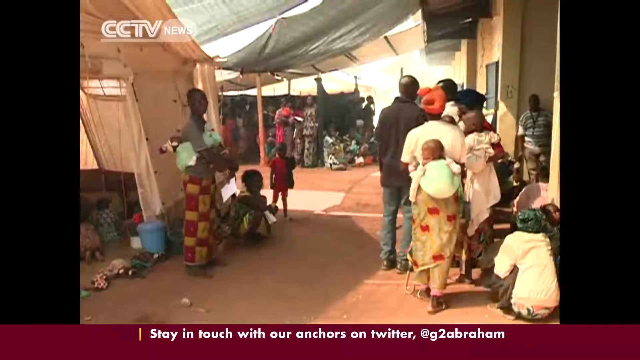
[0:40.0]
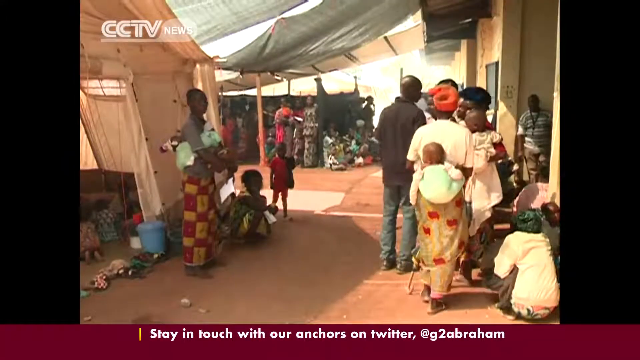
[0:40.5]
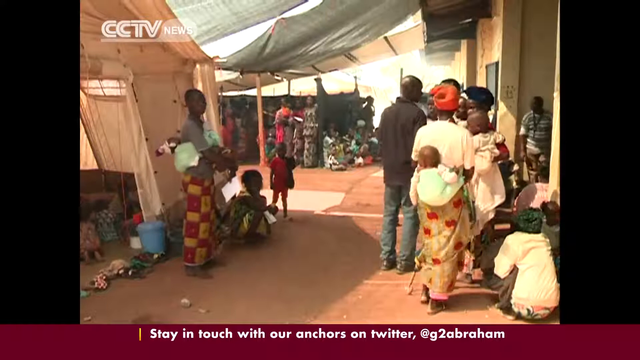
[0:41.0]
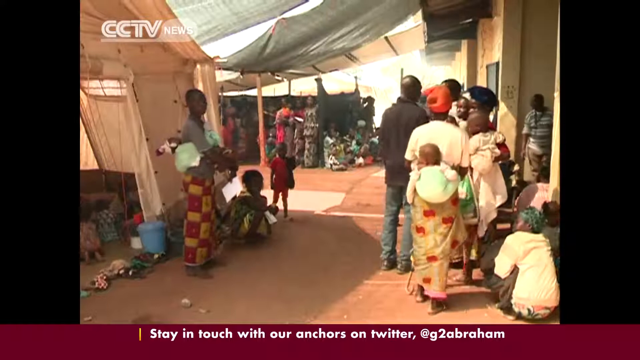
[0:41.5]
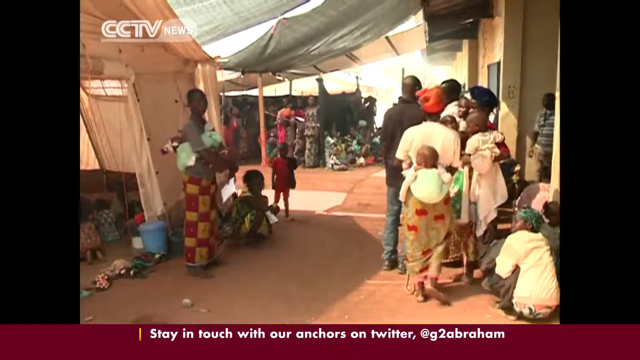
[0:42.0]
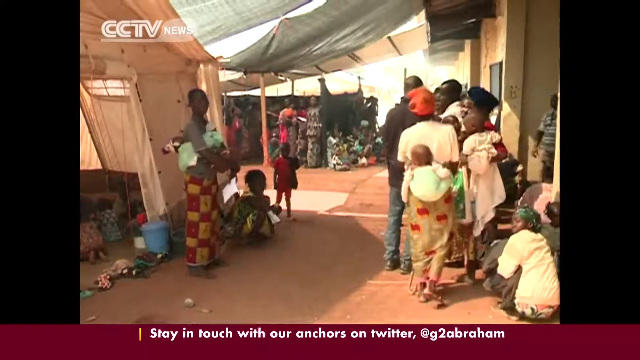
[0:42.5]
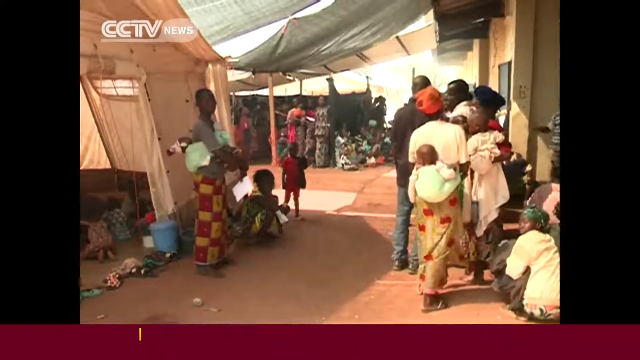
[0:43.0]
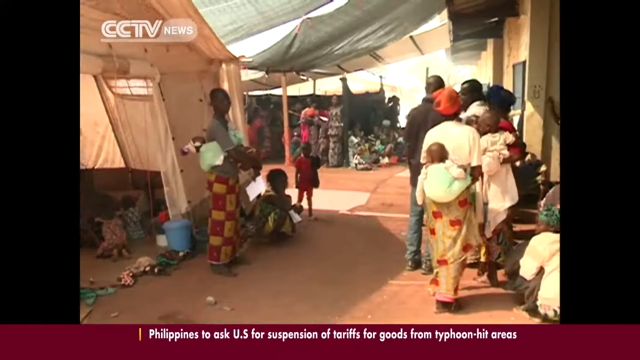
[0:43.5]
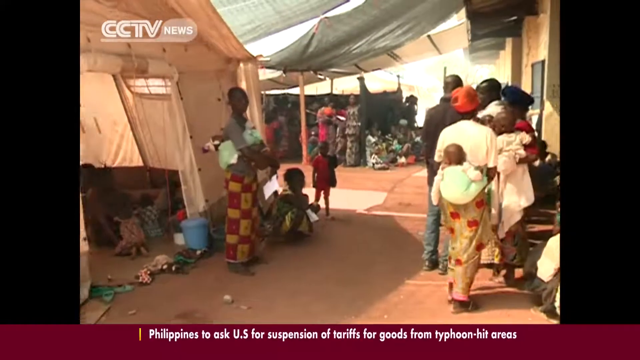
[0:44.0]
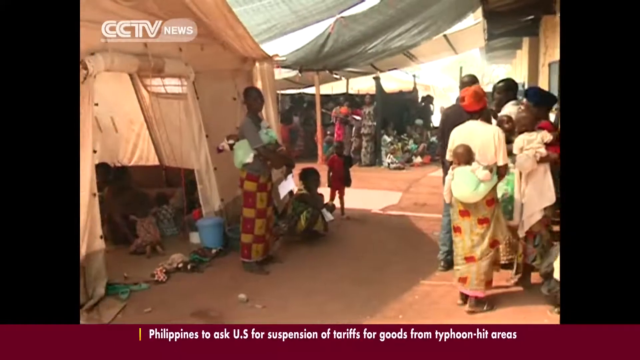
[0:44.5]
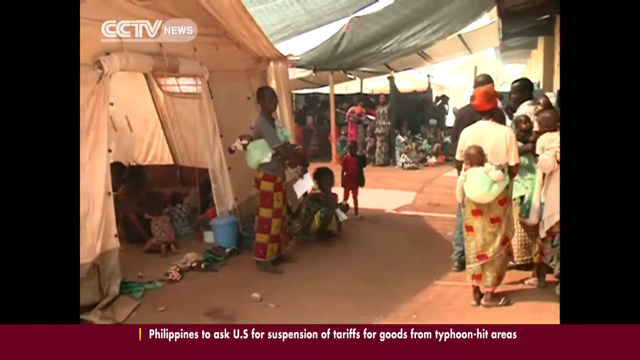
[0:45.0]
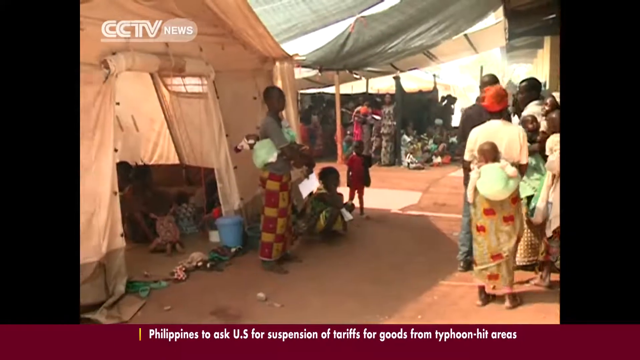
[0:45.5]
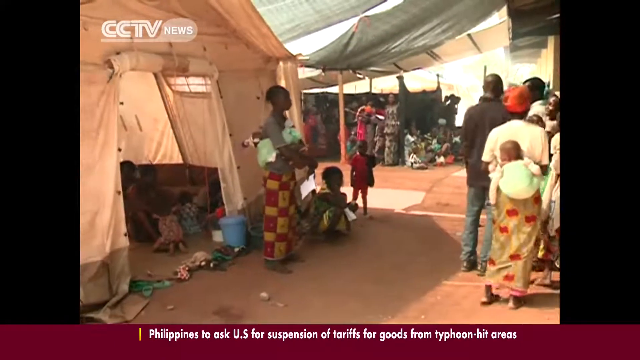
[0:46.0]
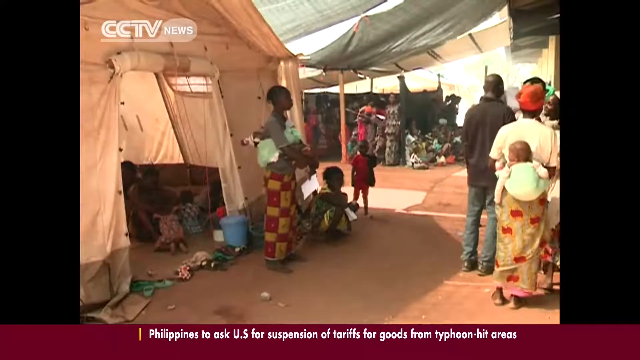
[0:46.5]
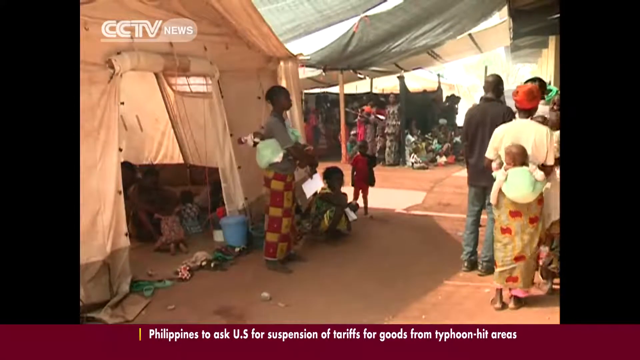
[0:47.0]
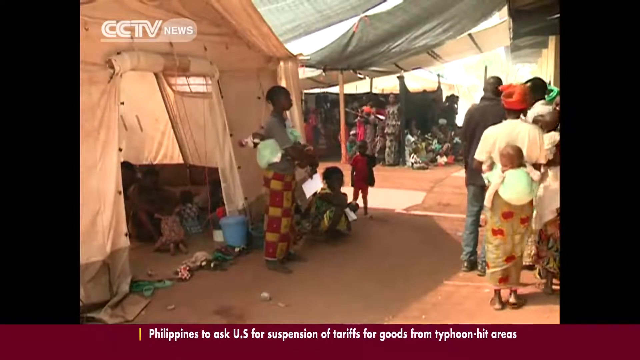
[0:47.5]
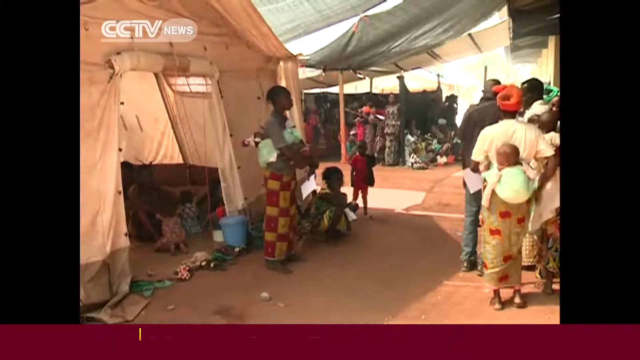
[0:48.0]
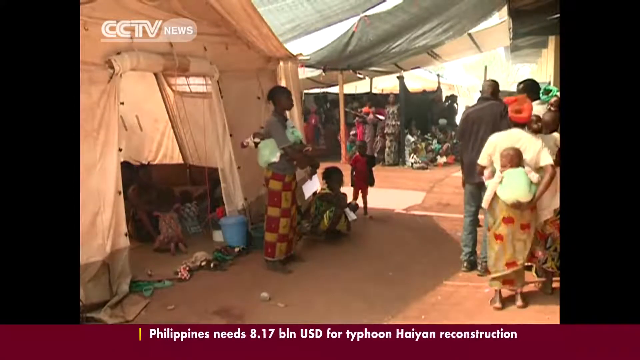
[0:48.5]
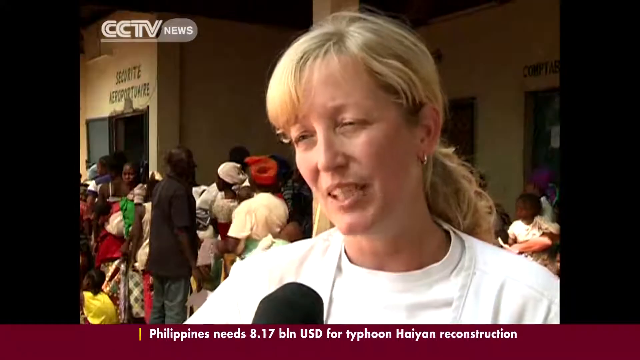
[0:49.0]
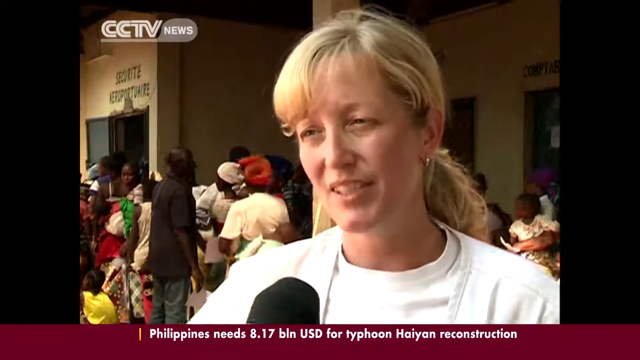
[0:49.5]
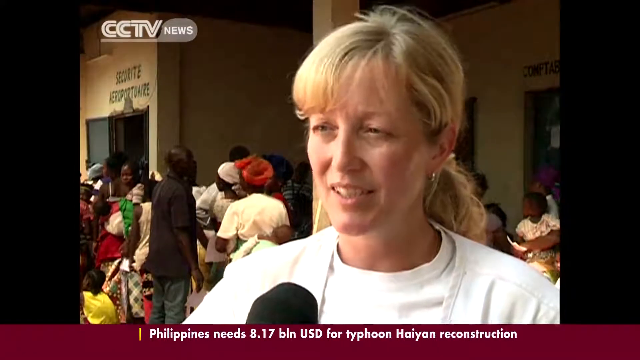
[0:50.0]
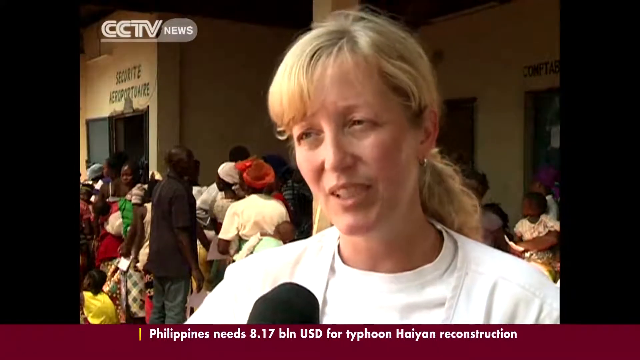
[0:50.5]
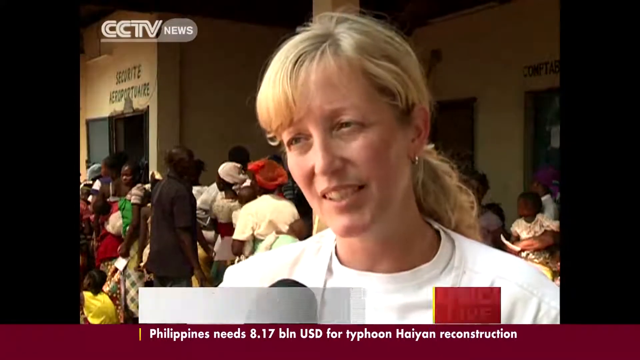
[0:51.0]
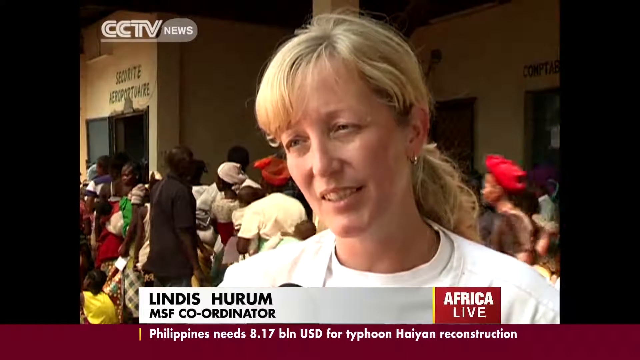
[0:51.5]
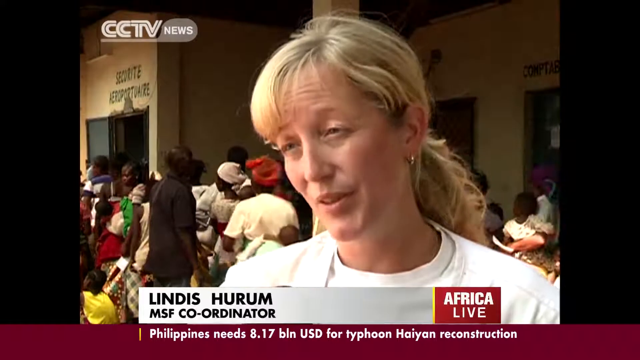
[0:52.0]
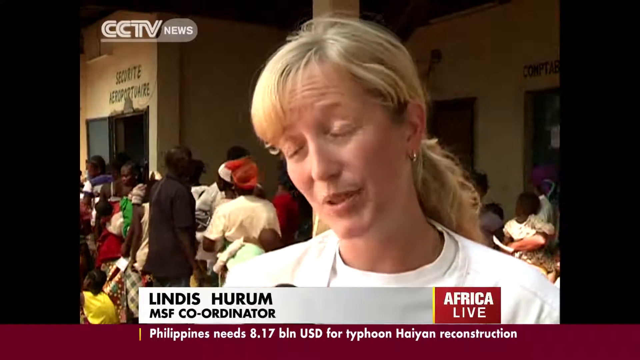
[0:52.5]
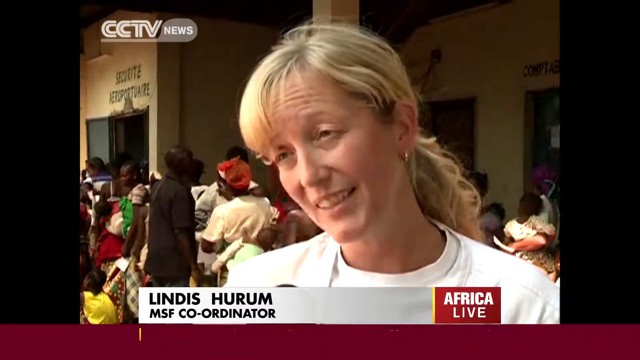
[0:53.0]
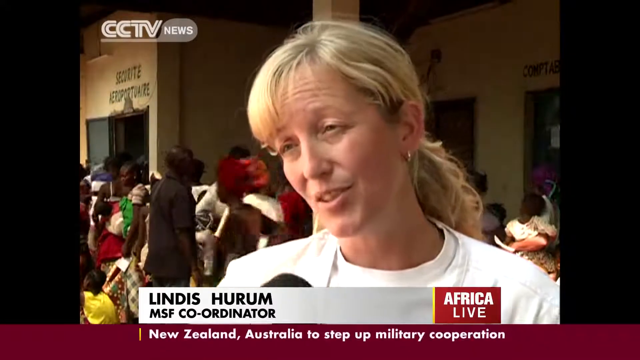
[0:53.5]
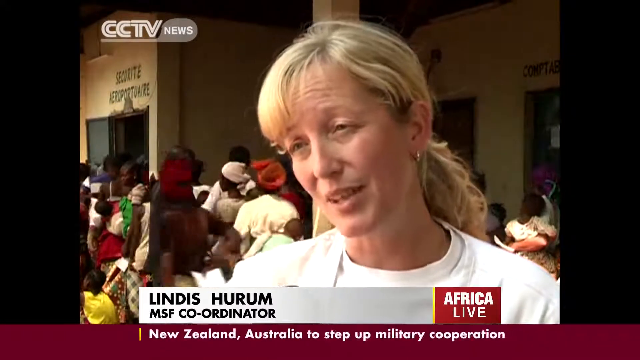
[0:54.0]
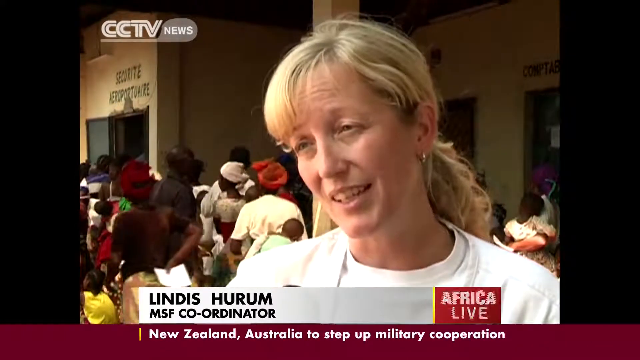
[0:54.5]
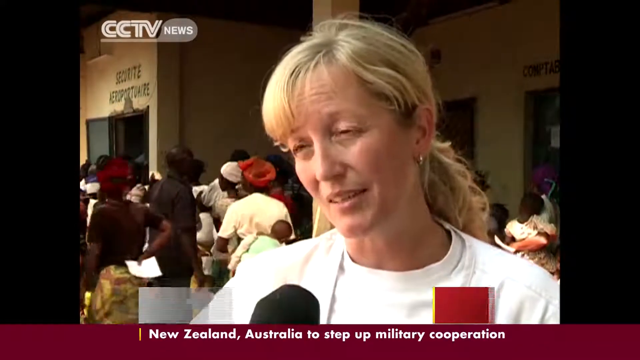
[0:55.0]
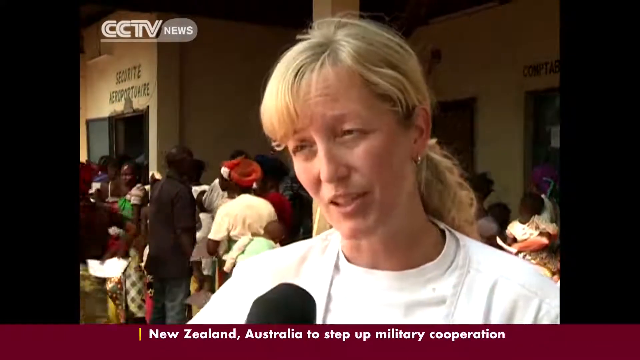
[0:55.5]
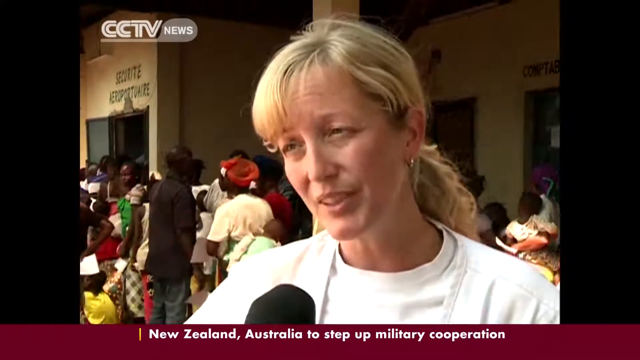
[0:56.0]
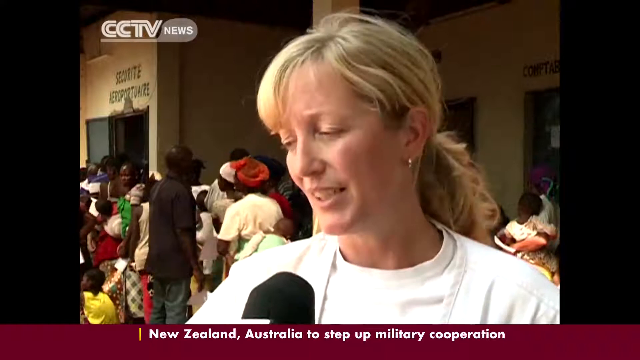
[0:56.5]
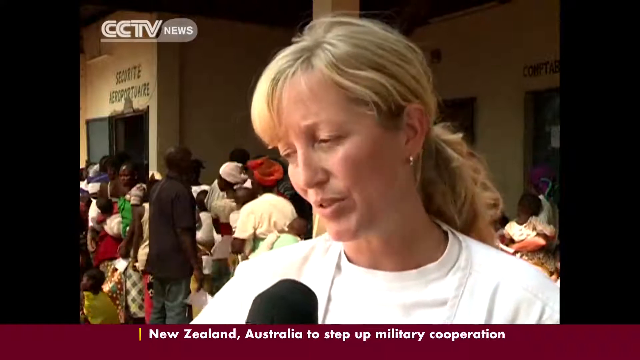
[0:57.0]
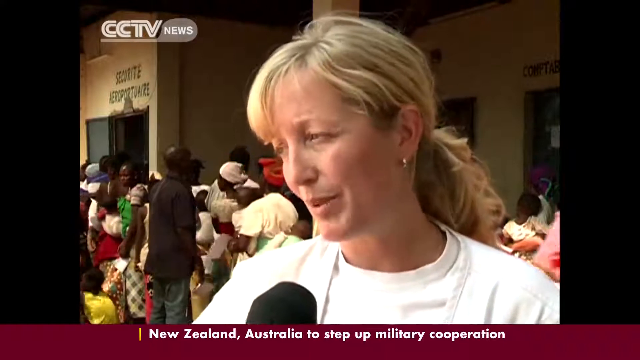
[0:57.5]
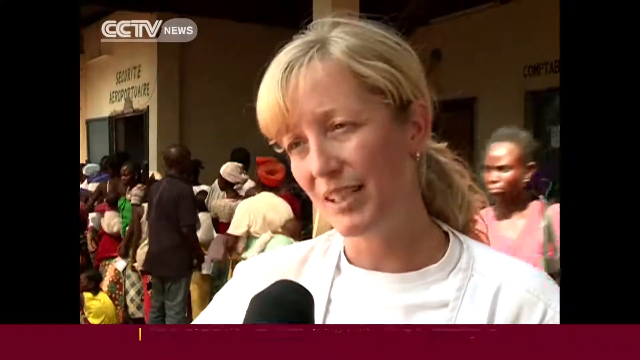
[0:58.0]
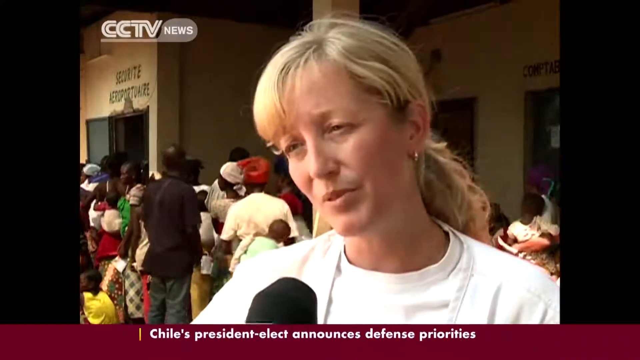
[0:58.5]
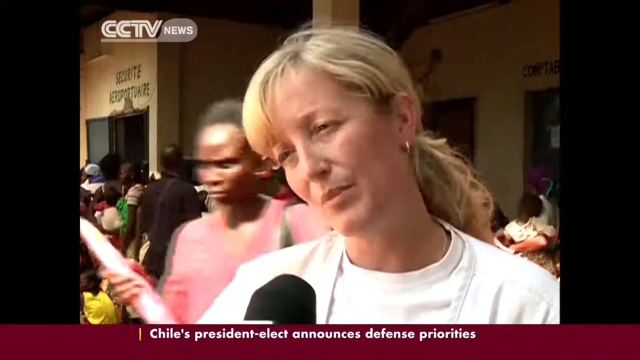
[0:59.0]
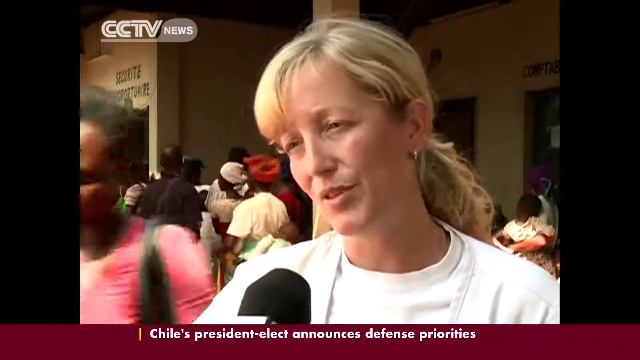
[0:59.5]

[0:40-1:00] "CCTV News" appears at the top of the screen. A group of people appears to be standing on the right side of the screen as if in line, with various other groups of people around. Overhead, what appears to be hanging fabric covers much of the overhead area. As the people stand in line, the camera moves to the left and reveals what appears to be a tent with more people sitting in it. Next, a woman with long blonde hair pulled back in a ponytail, dressed in white, has a microphone in front of her, with people all behind her. She speaks, moving her head back and forth. Beneath her the text "Lindis Hurum MSF Coordinator" appears and stays on screen as she continues speaking. People move about behind her, and one person walks from right to left right behind her.